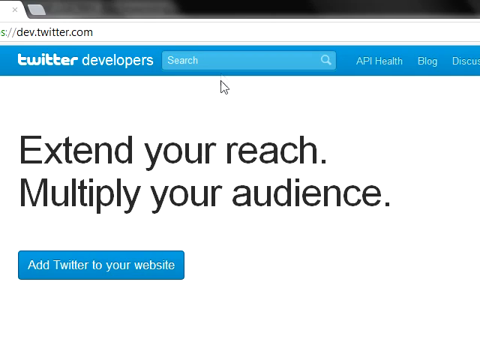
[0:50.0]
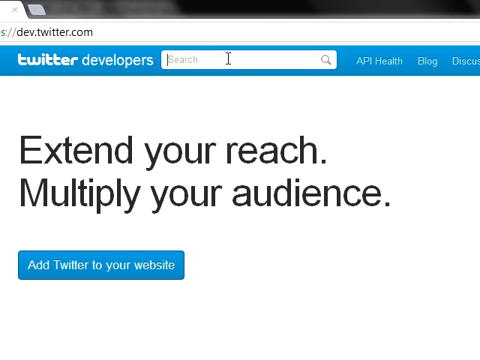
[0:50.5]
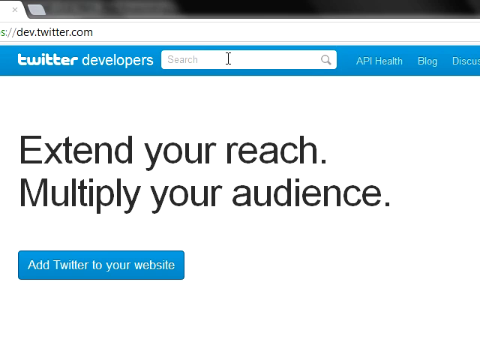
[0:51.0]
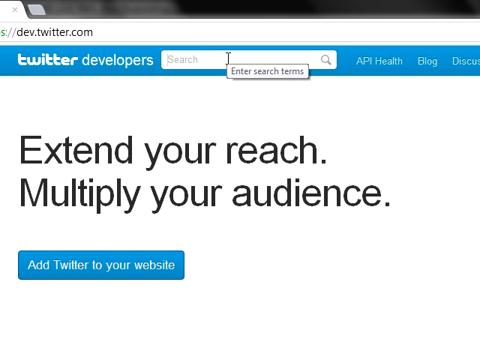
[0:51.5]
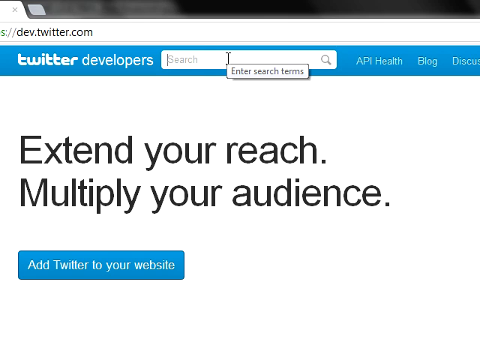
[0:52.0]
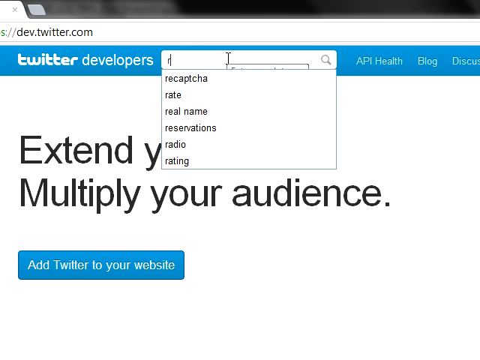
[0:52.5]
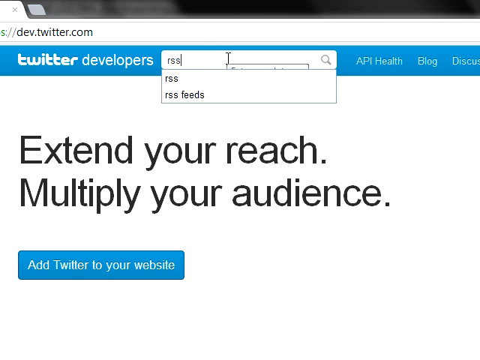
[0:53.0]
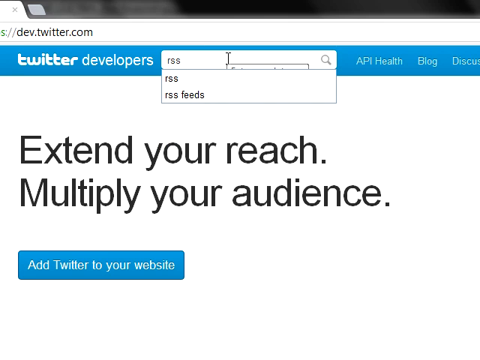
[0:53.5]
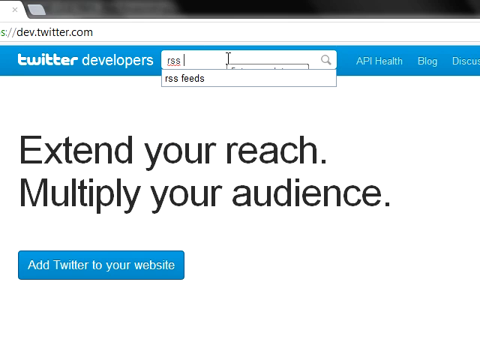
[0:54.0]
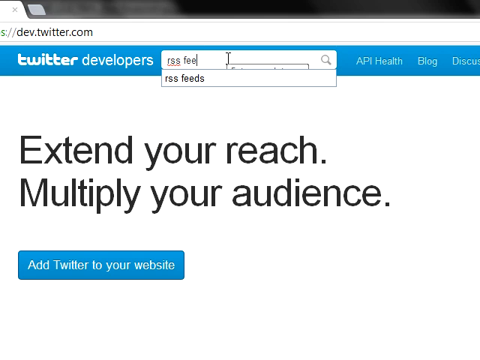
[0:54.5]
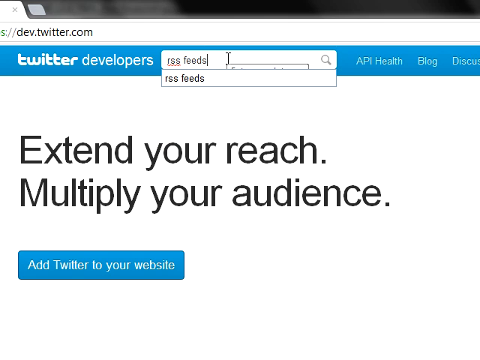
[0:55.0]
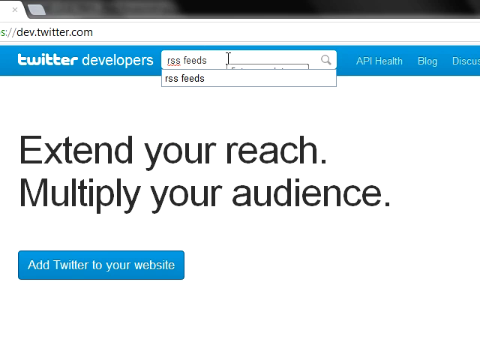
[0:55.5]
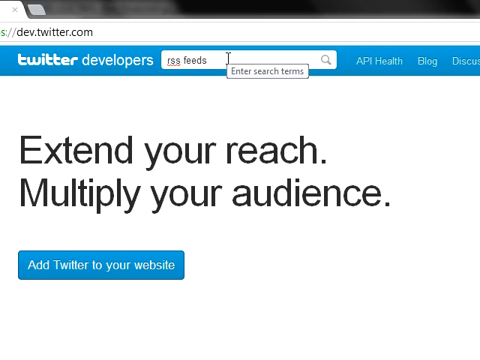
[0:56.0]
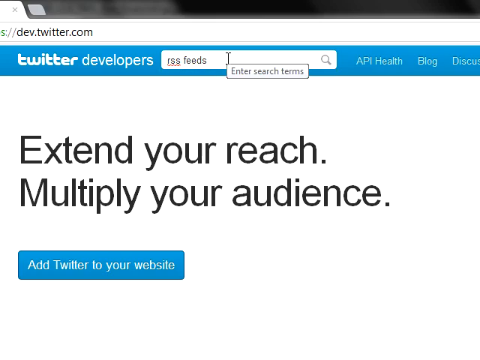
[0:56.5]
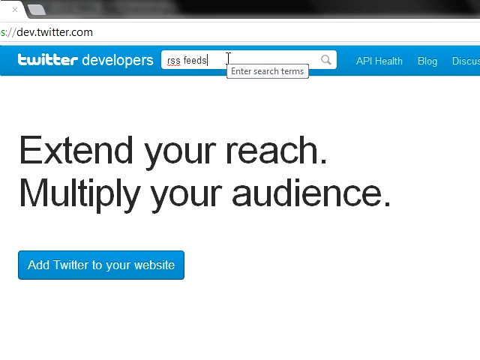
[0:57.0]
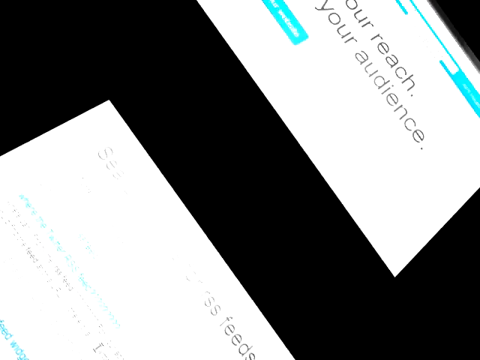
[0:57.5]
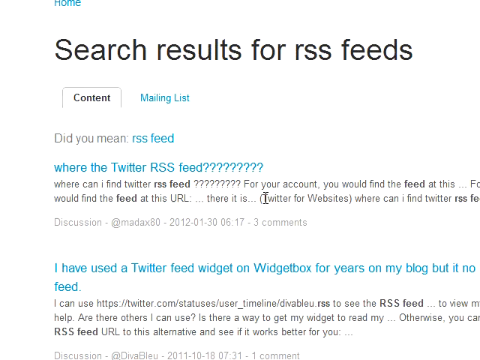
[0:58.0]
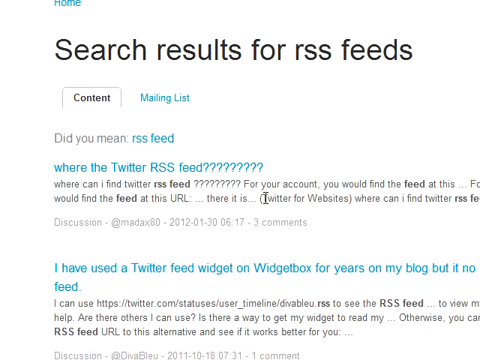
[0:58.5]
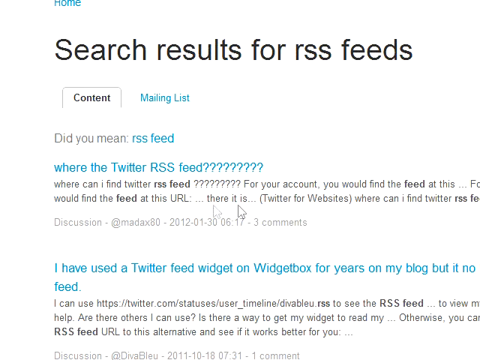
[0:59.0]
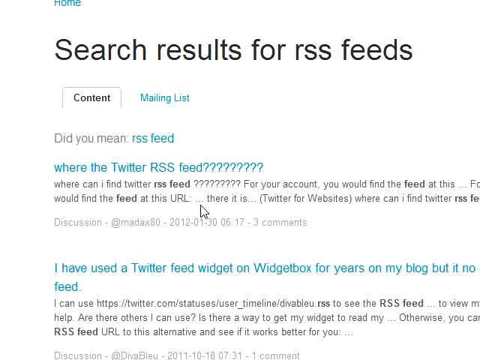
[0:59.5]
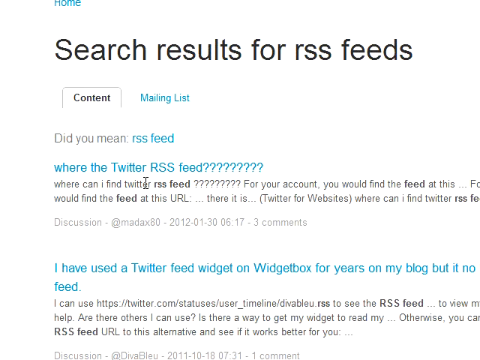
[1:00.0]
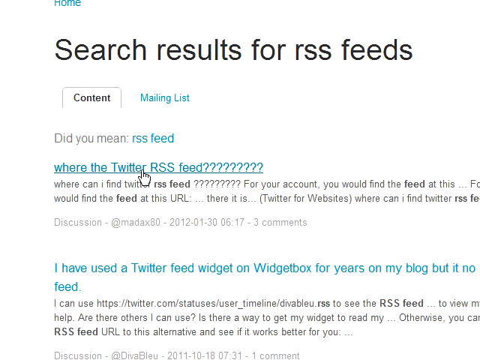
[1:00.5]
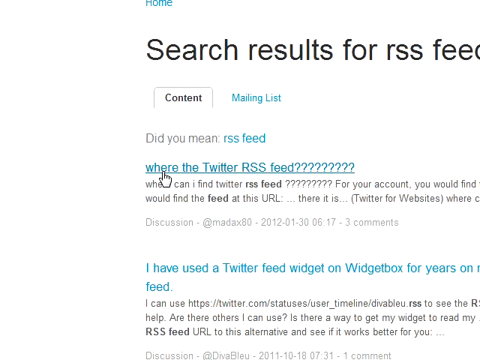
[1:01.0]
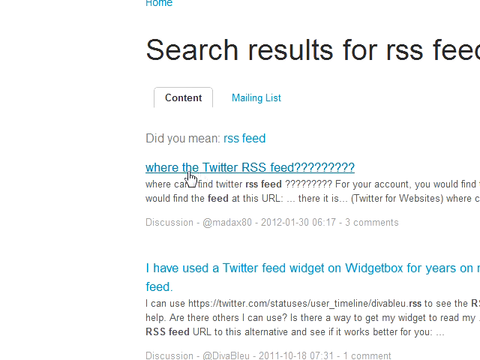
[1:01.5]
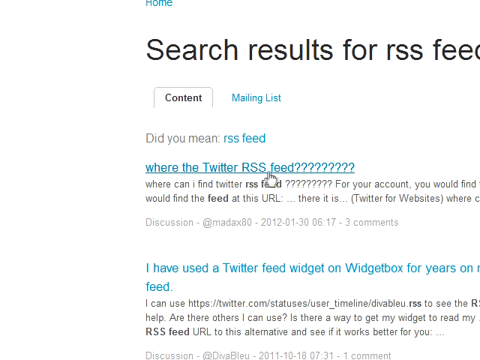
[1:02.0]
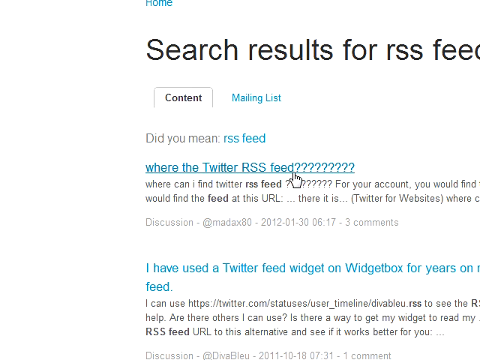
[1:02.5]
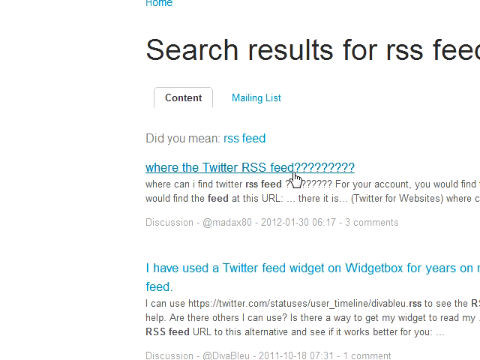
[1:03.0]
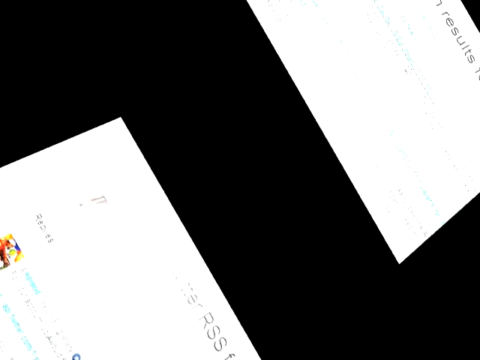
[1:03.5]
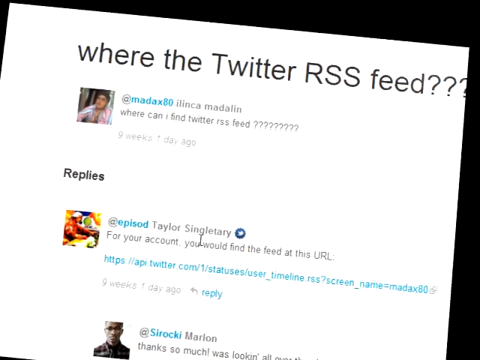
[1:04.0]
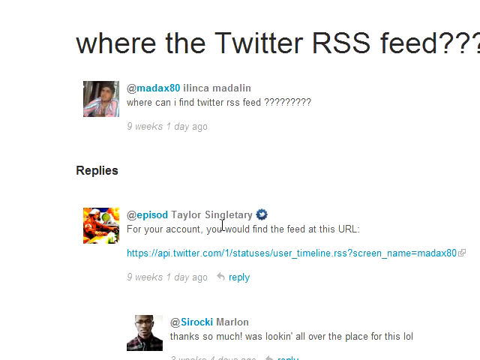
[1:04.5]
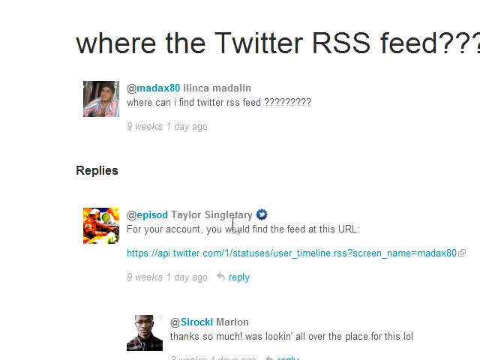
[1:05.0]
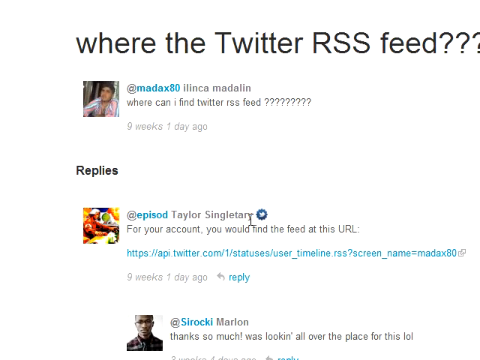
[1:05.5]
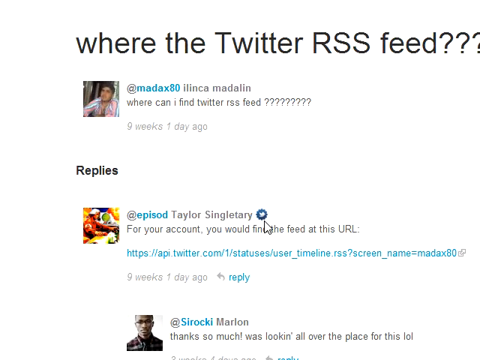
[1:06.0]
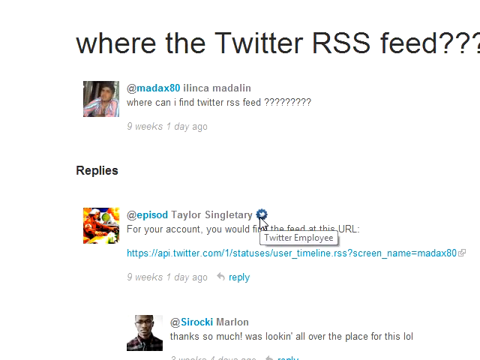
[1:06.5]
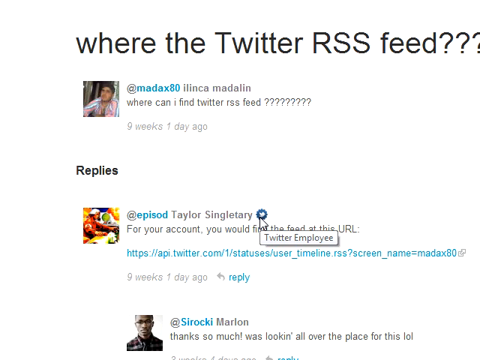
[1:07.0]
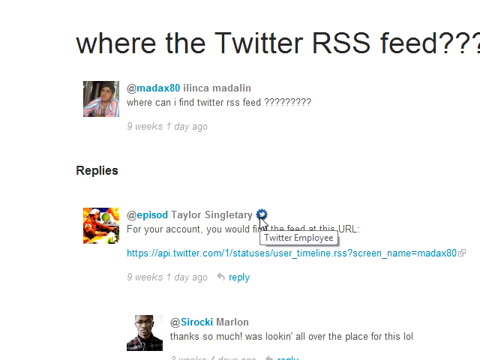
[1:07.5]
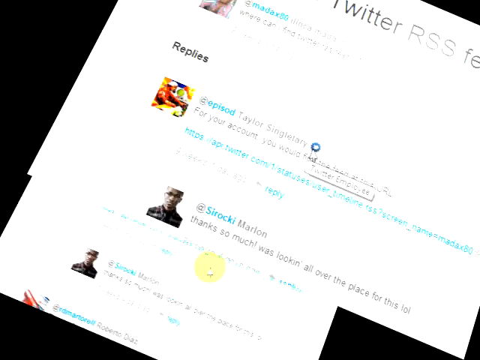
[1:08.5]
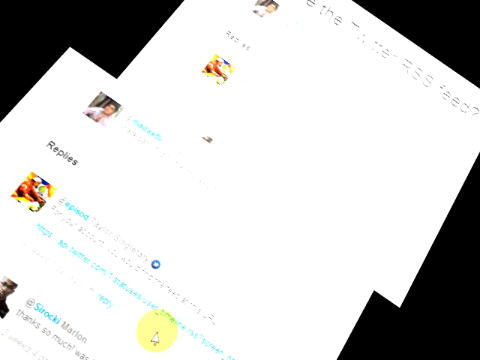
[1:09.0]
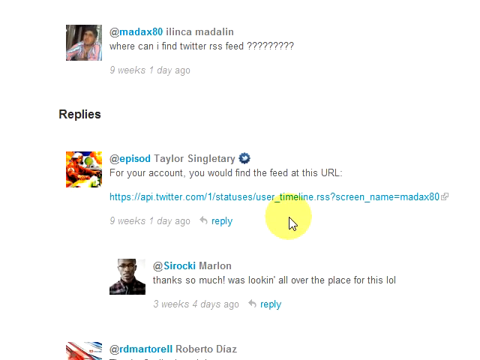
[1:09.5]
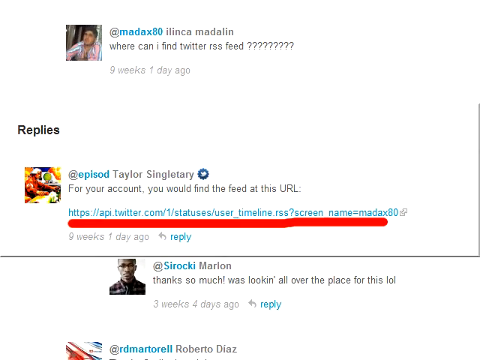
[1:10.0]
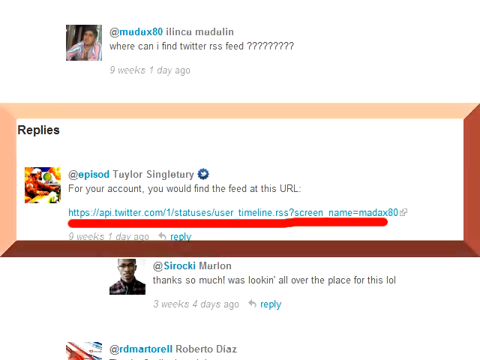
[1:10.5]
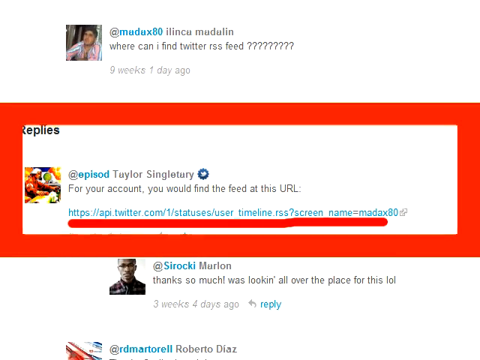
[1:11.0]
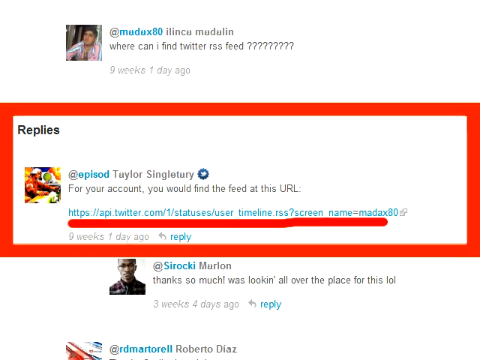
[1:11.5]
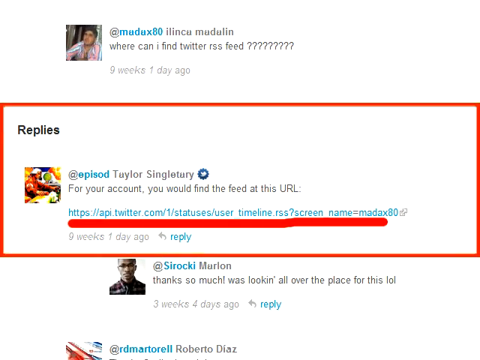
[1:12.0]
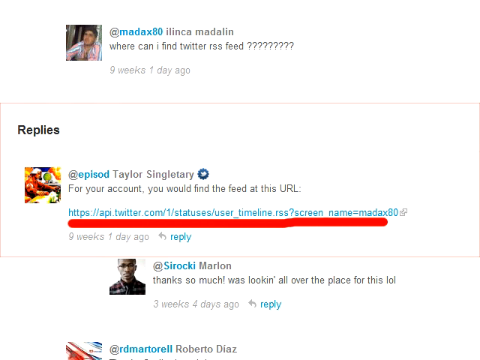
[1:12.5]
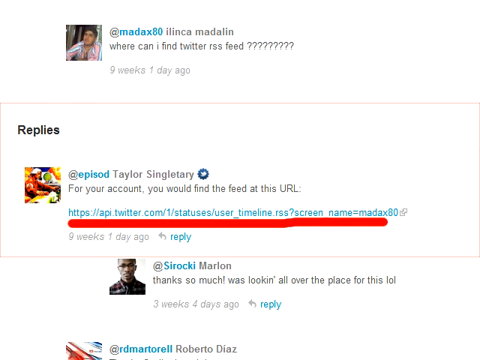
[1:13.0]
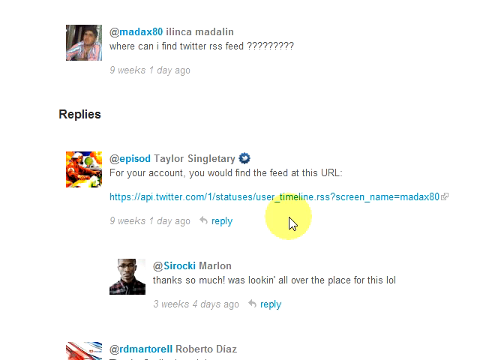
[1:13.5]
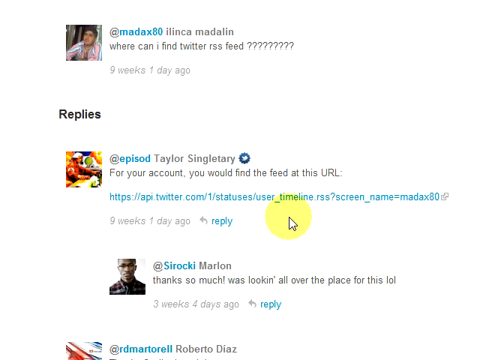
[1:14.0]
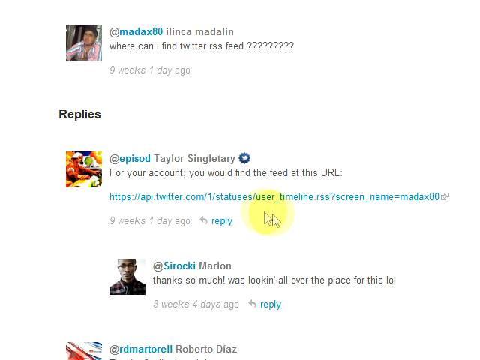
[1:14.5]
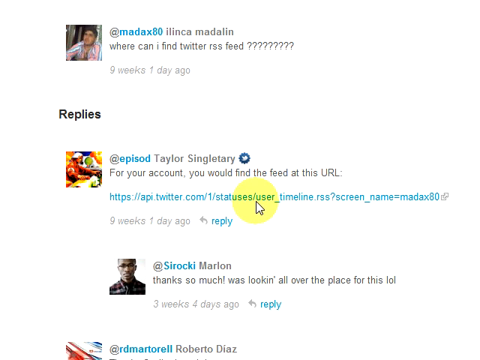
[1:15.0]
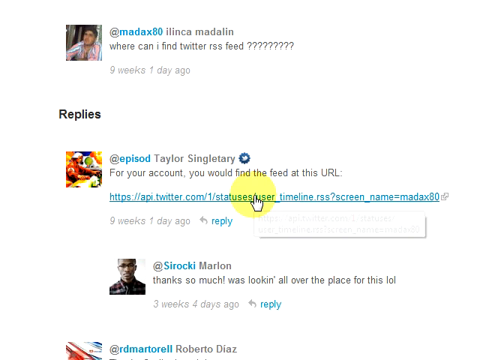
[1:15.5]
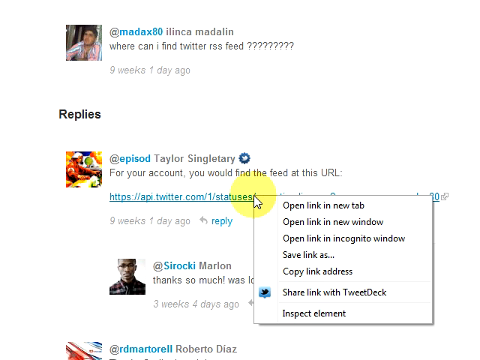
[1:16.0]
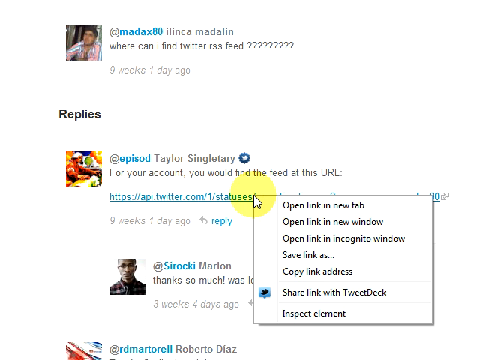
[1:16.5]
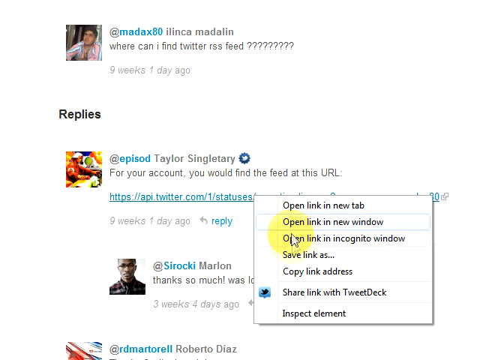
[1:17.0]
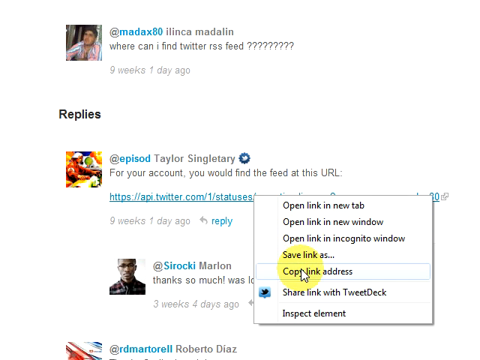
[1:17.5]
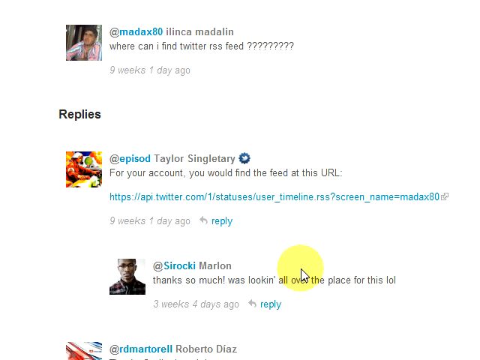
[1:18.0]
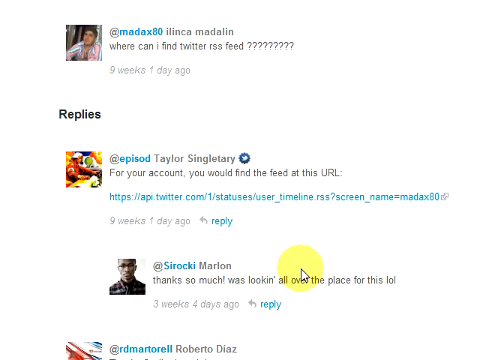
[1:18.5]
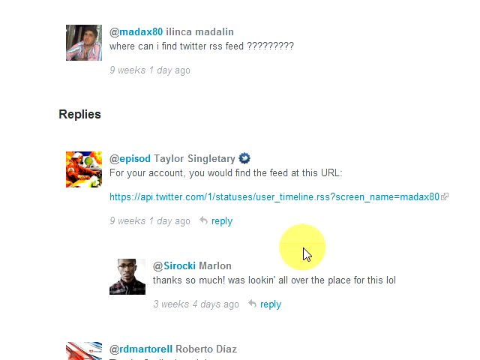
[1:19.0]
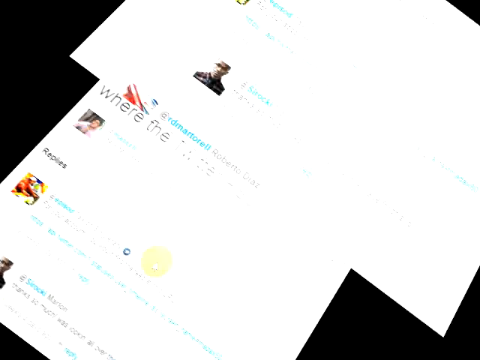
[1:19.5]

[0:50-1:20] On the Twitter developers web page, the person clicks in the search bar with the cursor and types "RSS FEDS." The page flips to show "search results for RSS feeds" with several links underneath, some with blue titles and text below them. The person moves the mouse cursor to the blue link "where the Twitter RSS feed?" followed by a bunch of question marks and clicks it. The resulting page shows the same title, the original comment someone posted, and replies underneath it. The cursor moves to one of the replies, toward a blue, roughly circular icon with a Twitter bird on it, and when it hovers over the icon a little box appears that says "Twitter employee." Next comes a screen that is the same as the previous one, but now the cursor has a yellow circle around it, much larger than the cursor itself. A red box appears around the first reply, its thickness increasing and decreasing. The person then moves the cursor to a link in one of the replies and clicks it, a drop-down menu pops up, and they move the cursor to "copy link address" and click it.